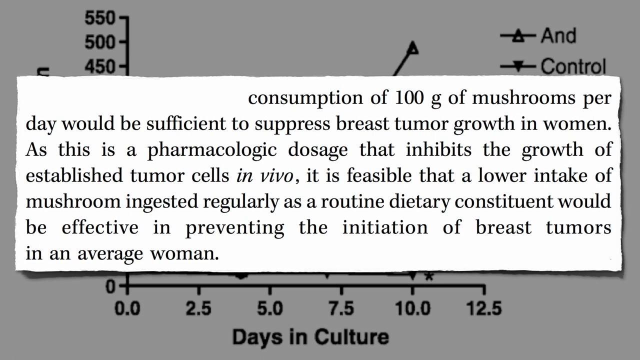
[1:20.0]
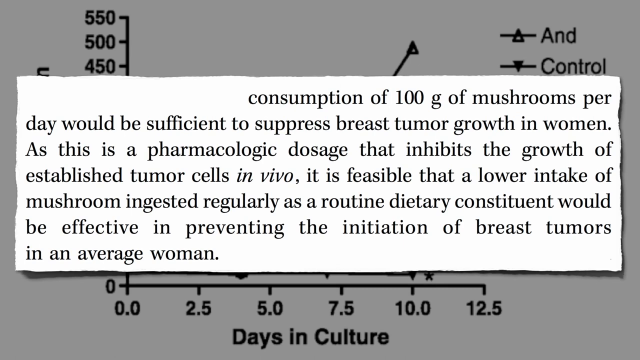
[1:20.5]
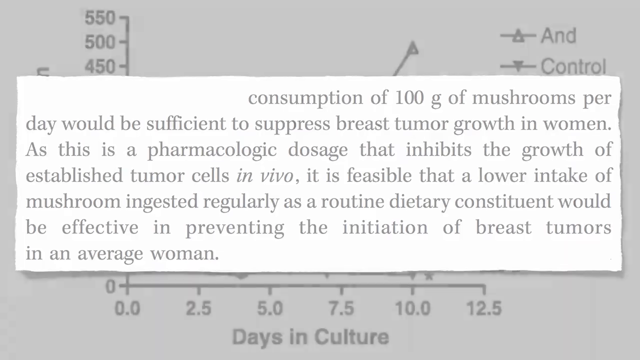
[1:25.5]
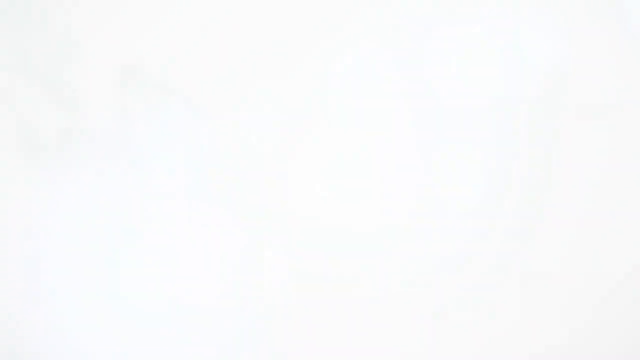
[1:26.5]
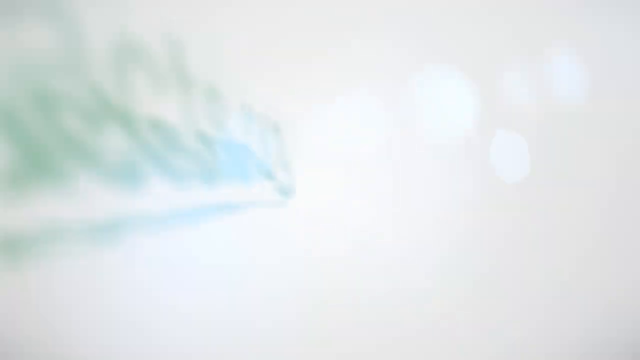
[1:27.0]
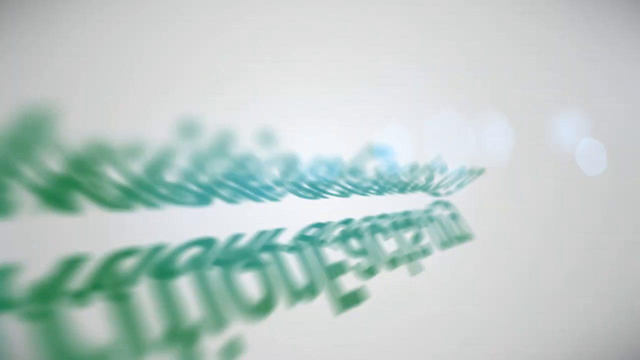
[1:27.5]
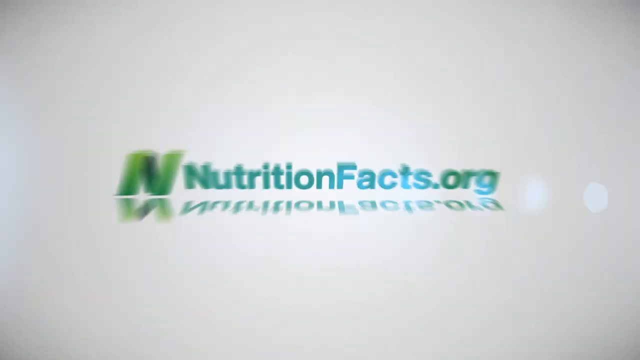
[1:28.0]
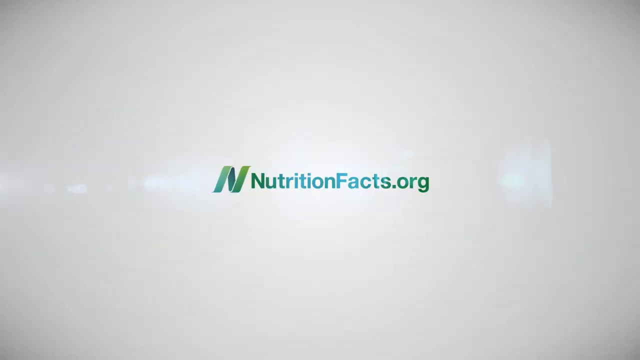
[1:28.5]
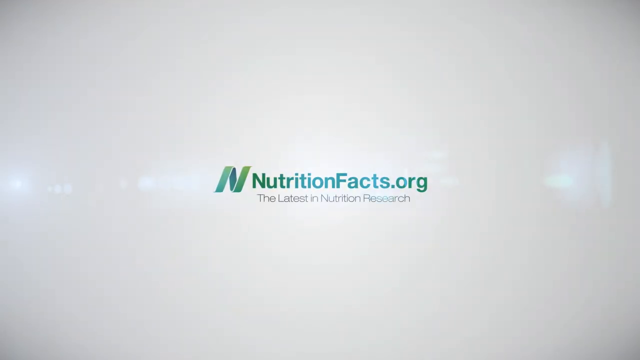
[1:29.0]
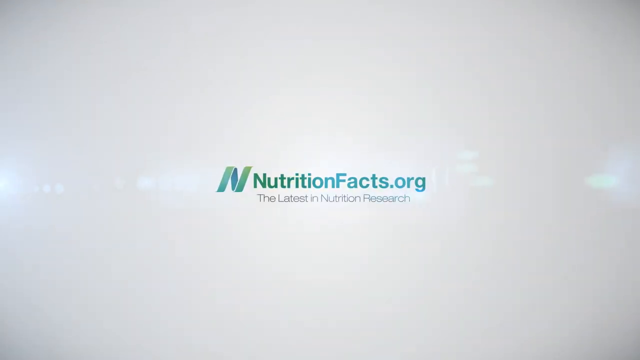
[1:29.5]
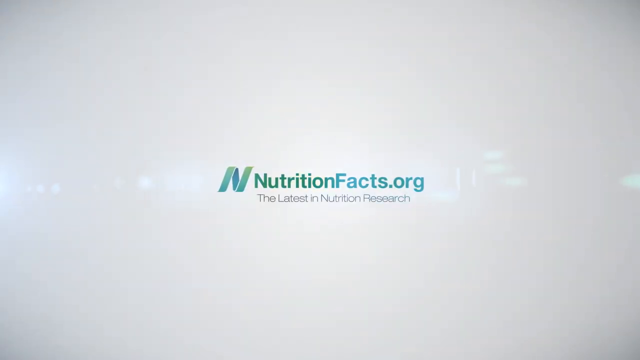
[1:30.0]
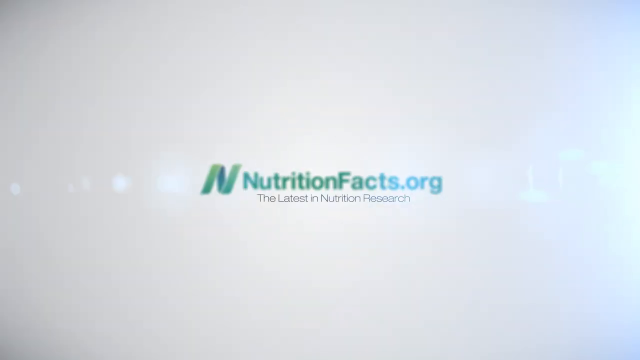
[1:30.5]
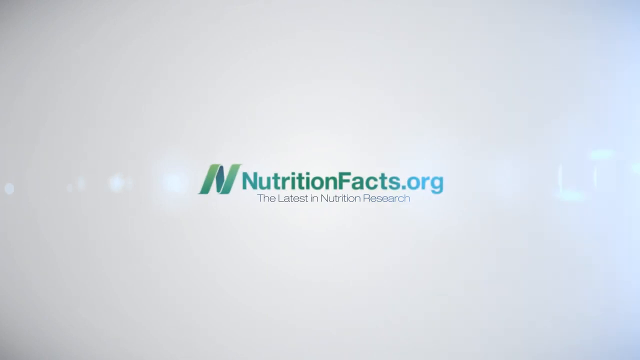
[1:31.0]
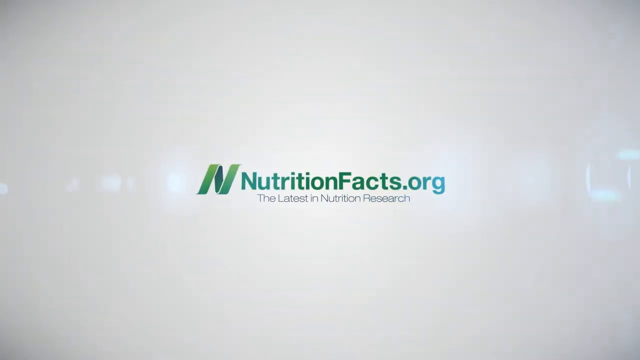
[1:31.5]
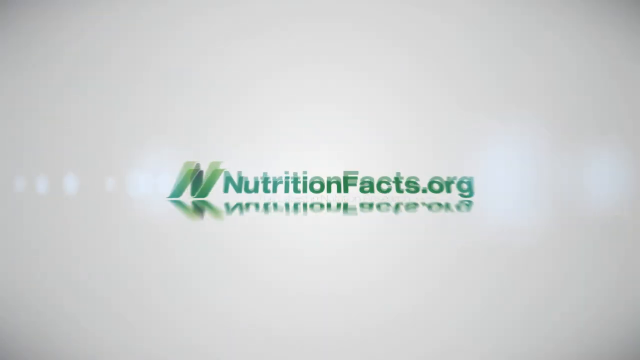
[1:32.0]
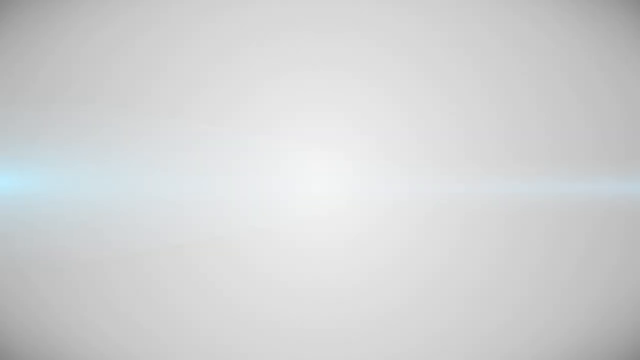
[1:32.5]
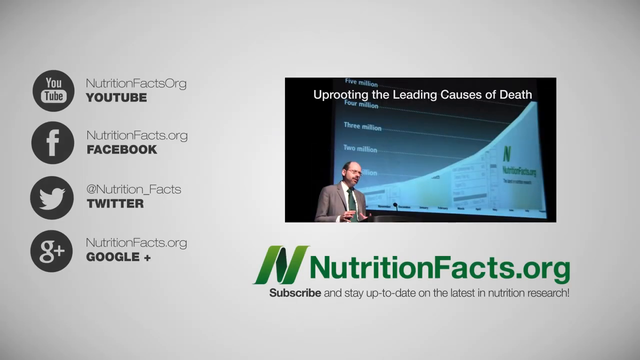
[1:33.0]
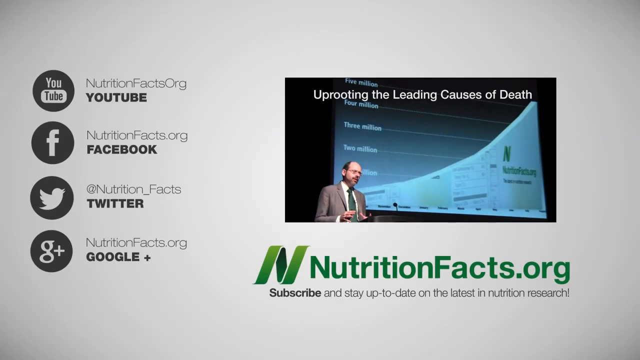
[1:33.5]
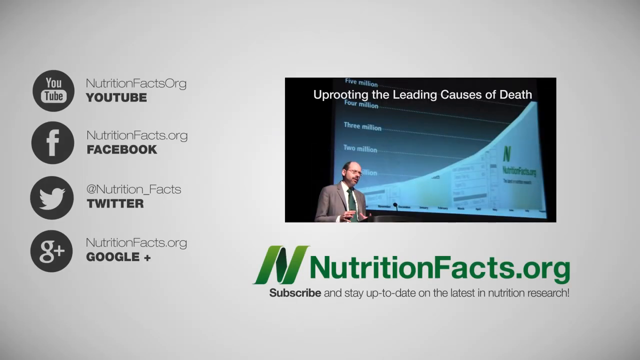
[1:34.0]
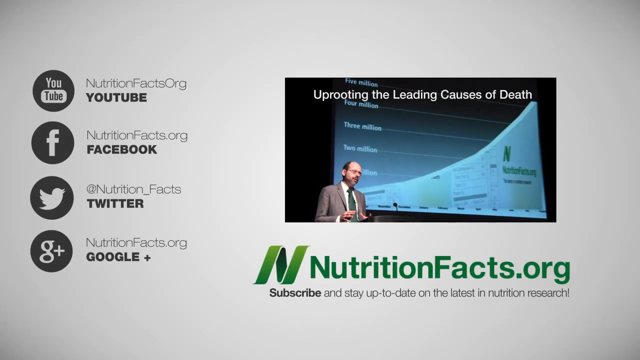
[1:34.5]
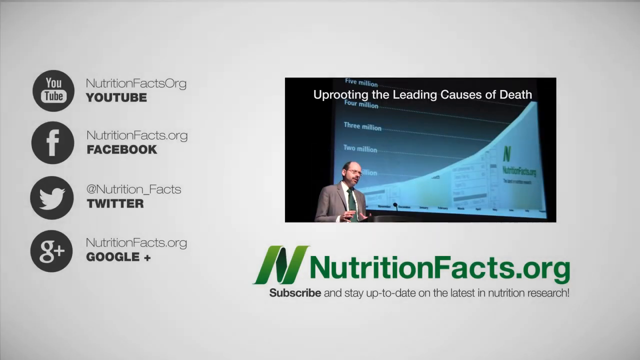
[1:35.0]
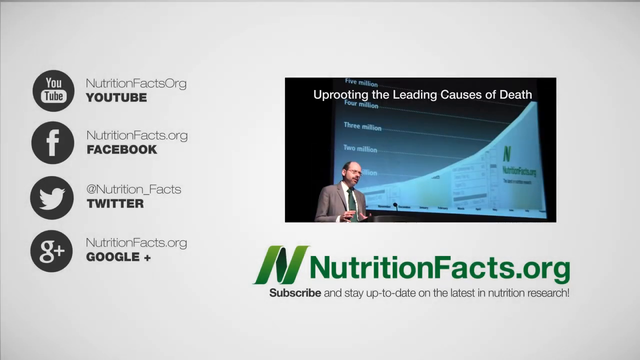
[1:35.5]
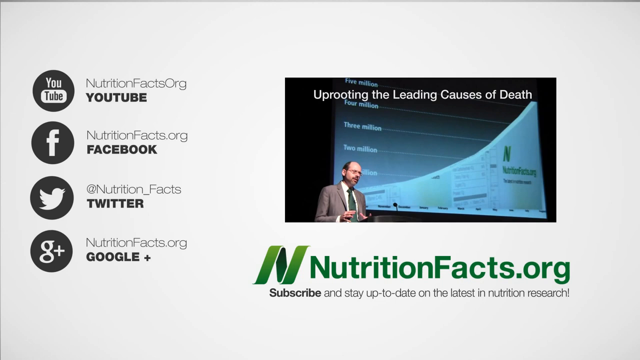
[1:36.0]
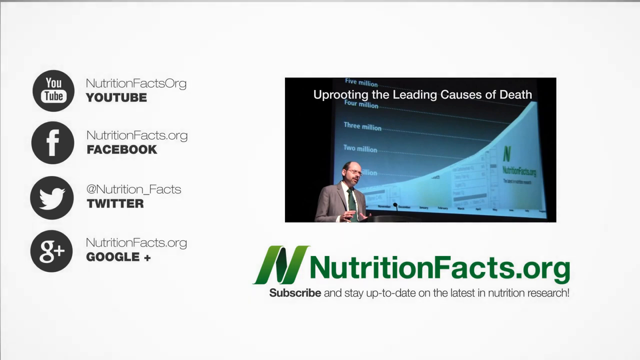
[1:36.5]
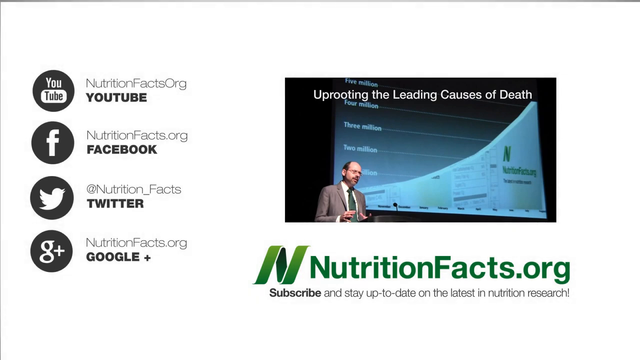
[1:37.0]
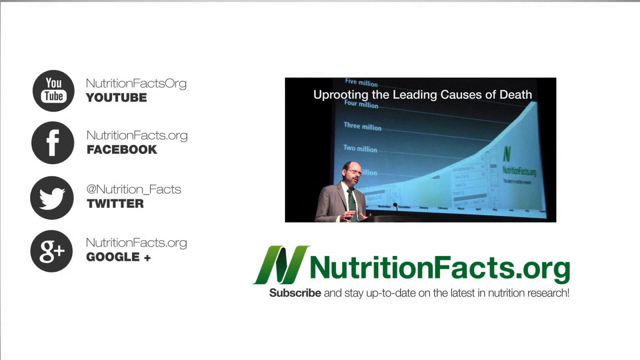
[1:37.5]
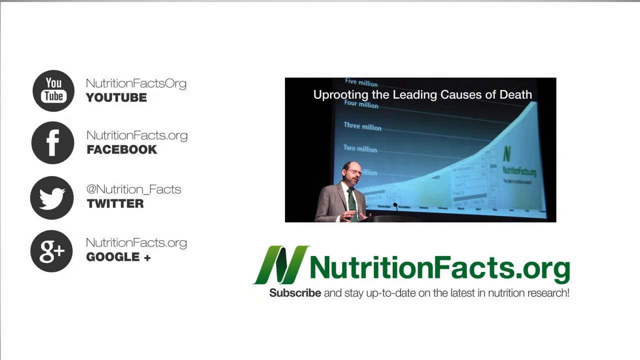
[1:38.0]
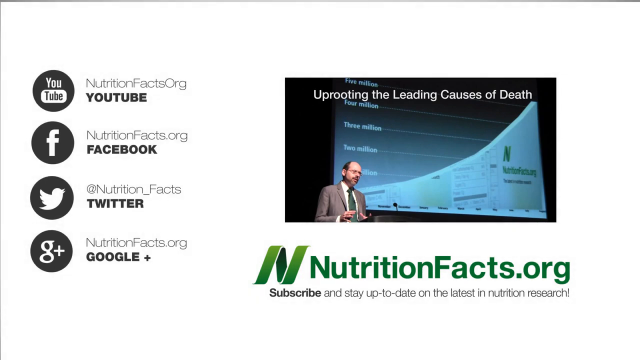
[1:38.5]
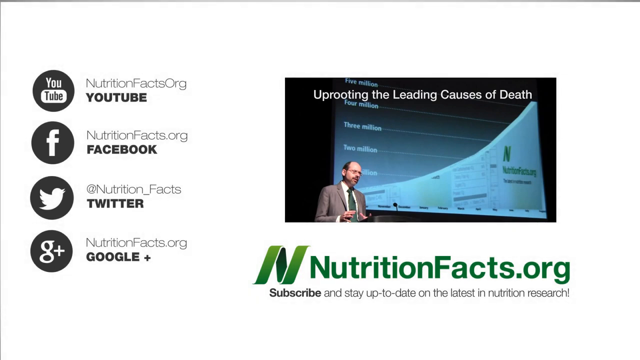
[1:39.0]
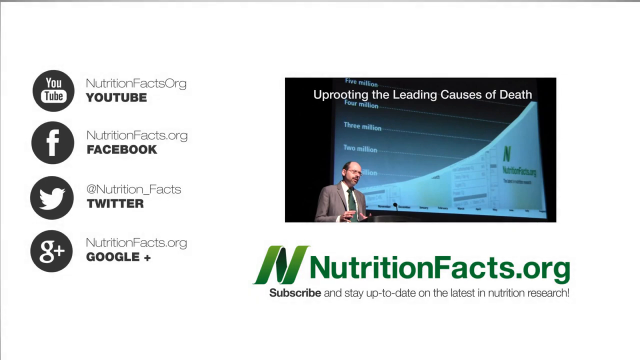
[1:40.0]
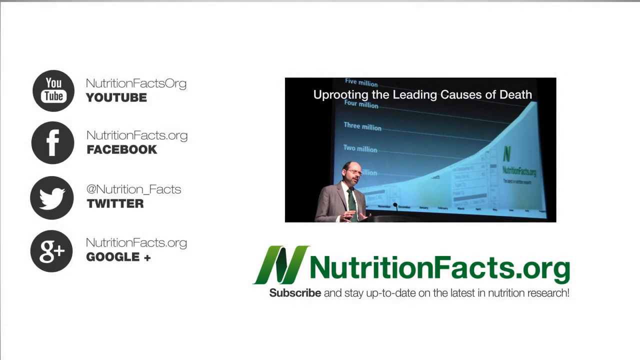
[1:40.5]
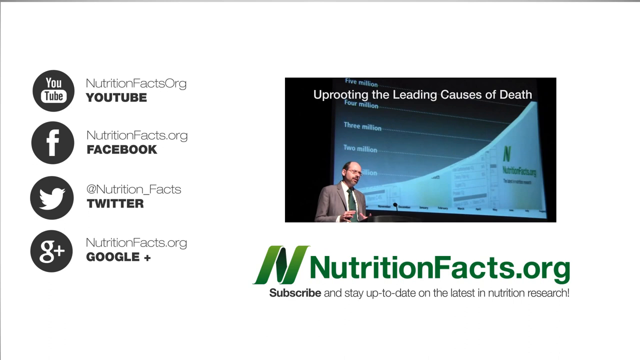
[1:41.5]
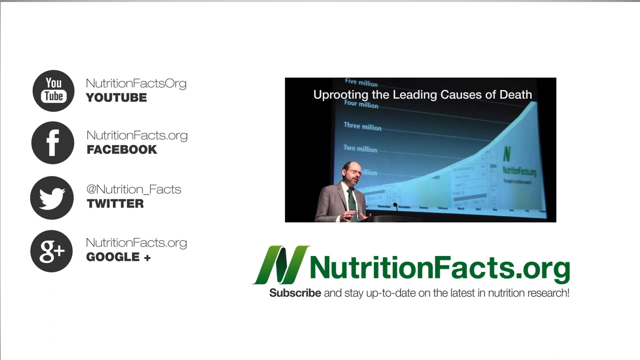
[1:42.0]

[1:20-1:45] A text pop-up from an article is in front of a screen with a graph in the background. It reads "consumption of 100 grams of mushroom per day would be sufficient to suppress breast tumor growth in women. As this is a pharmacologic dosage that inhibits the growth of established tumor cells in vivo, it is feasible that a lower intake of mushroom ingested regularly as a routine dietary constituent will be effective in preventing the initiation of breast tumor in an average woman." The message stays on the screen for some time. Next, the screen transitions to a blank off-white background, and a website pops up in green, more of a bluish-green, text: nutritionfacts.org, with "the latest in nutrition research" written below it. A special effect of the screen with text follows, and then an image of a man standing beside a chart display pops up on the right. Below it again is the website nutritionfacts.org. On the left side are the YouTube, Facebook, Twitter and Google handles of NutritionFacts.org.